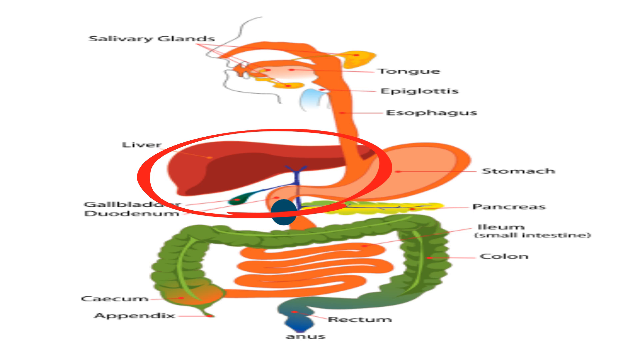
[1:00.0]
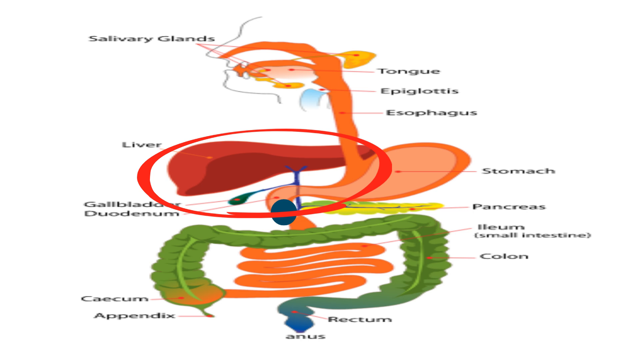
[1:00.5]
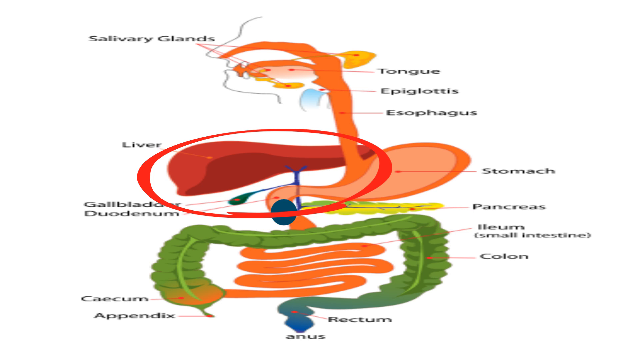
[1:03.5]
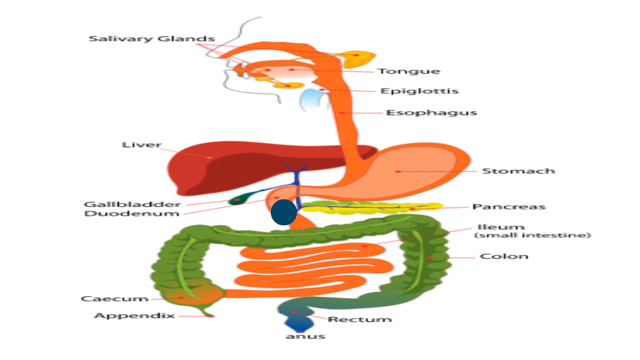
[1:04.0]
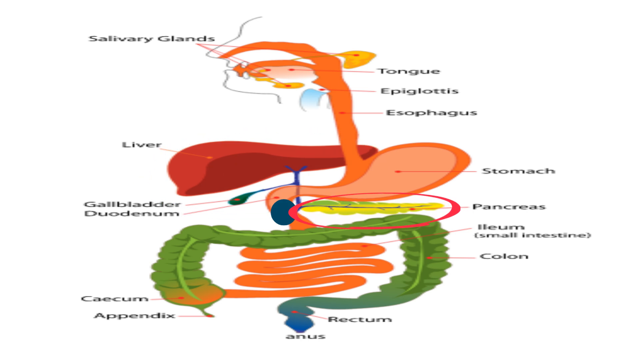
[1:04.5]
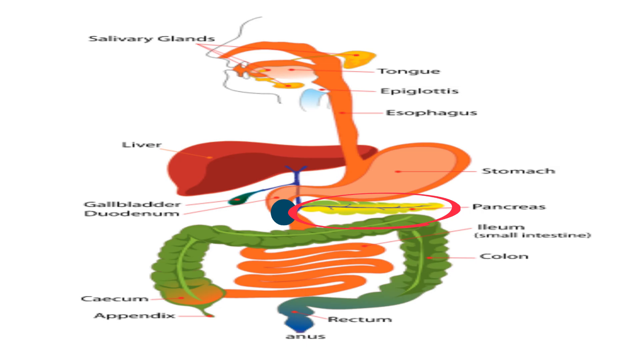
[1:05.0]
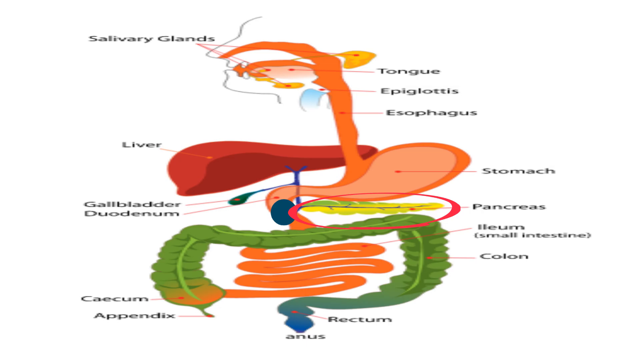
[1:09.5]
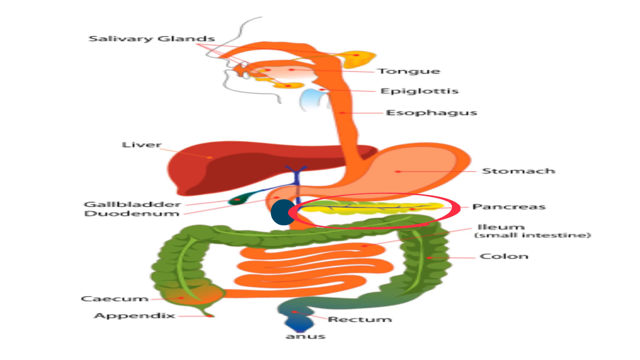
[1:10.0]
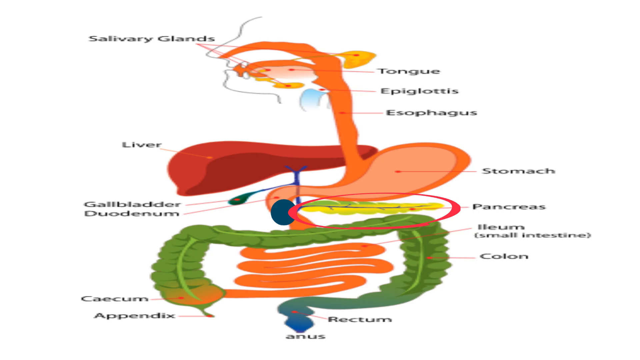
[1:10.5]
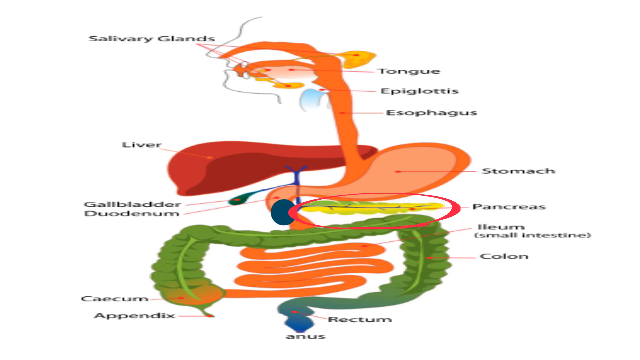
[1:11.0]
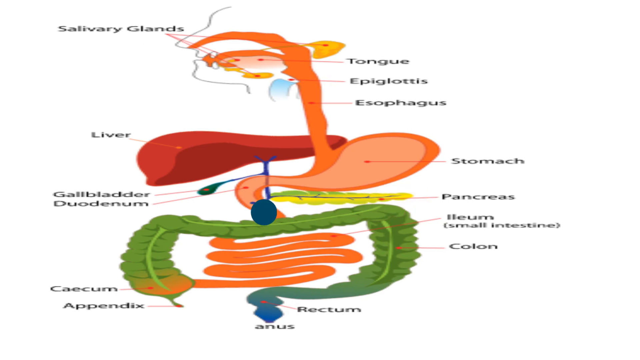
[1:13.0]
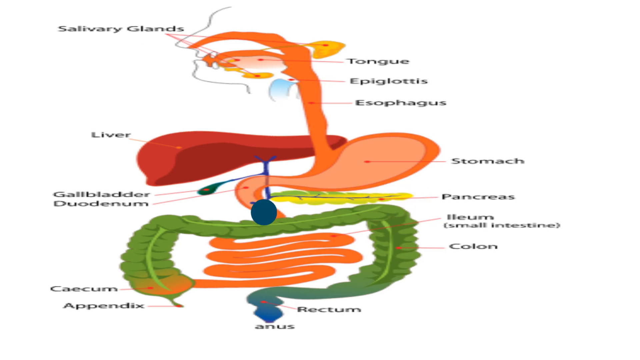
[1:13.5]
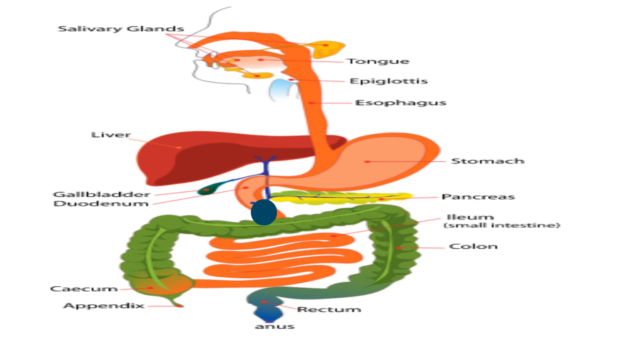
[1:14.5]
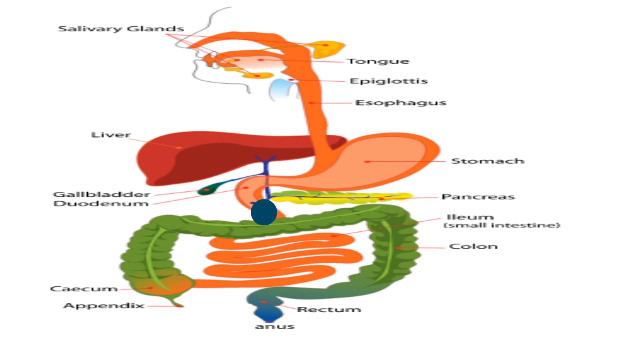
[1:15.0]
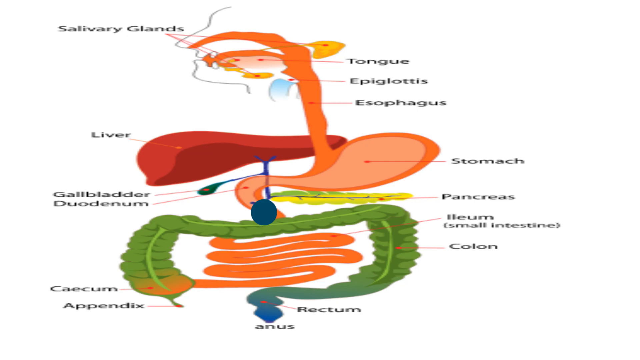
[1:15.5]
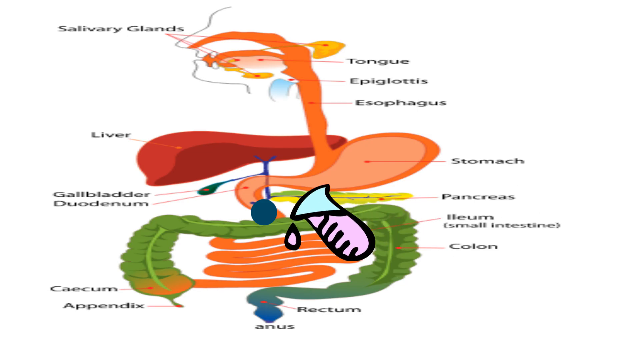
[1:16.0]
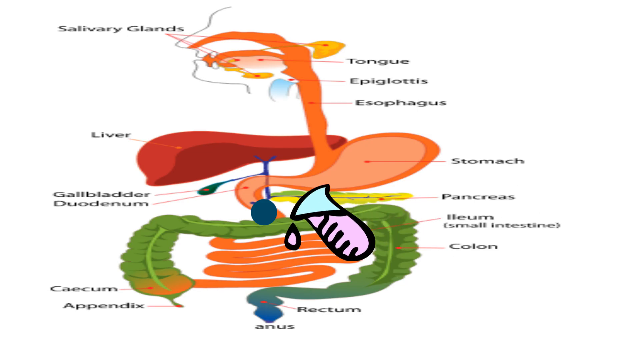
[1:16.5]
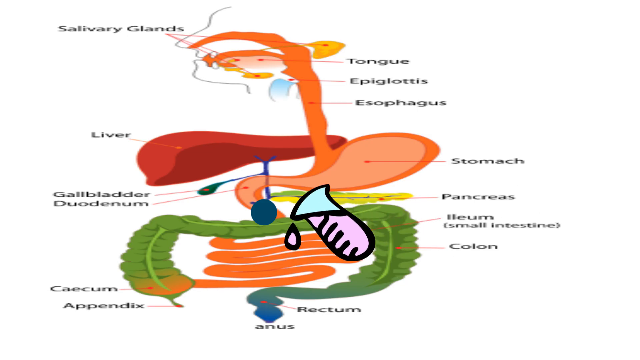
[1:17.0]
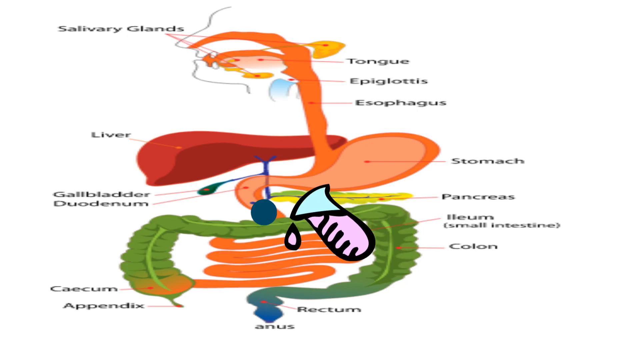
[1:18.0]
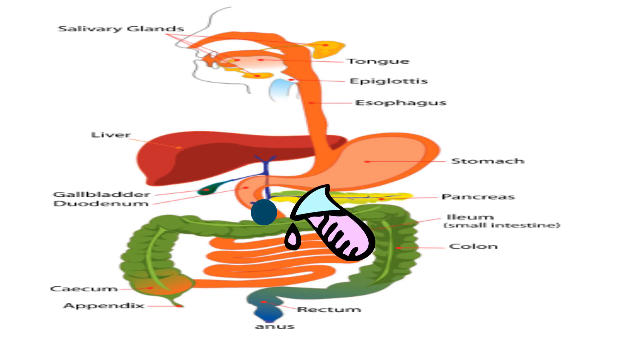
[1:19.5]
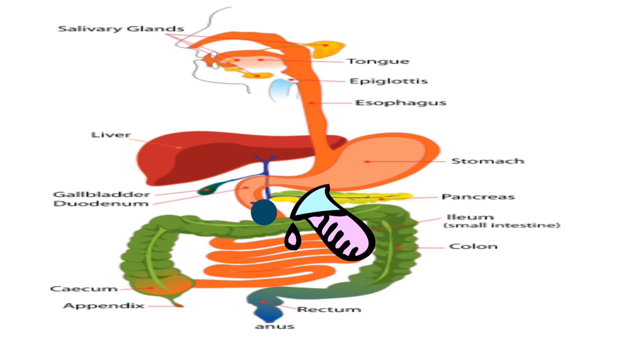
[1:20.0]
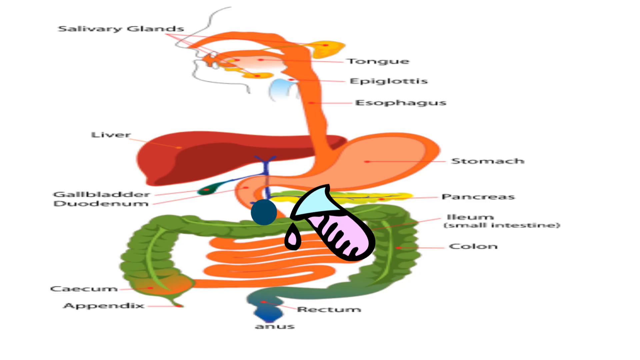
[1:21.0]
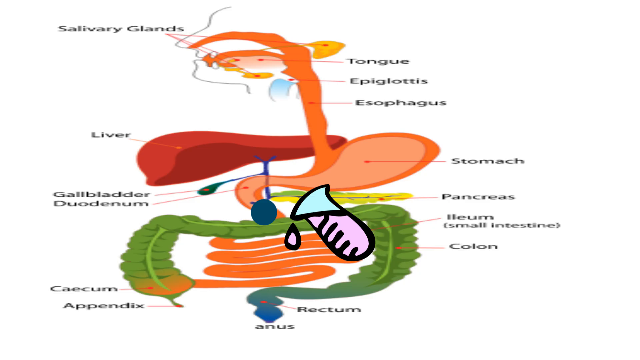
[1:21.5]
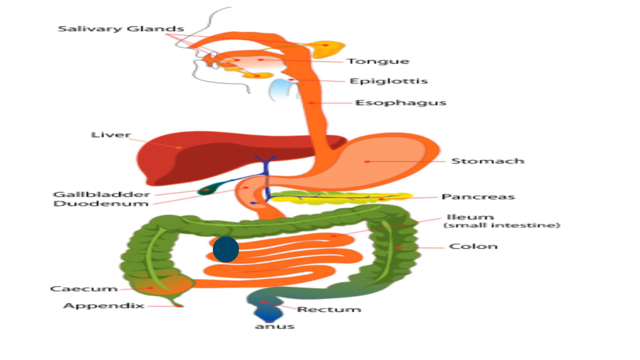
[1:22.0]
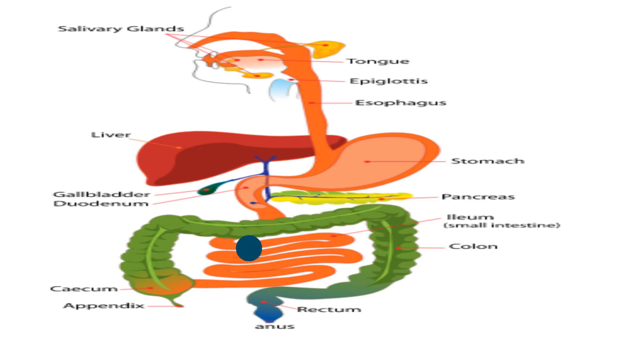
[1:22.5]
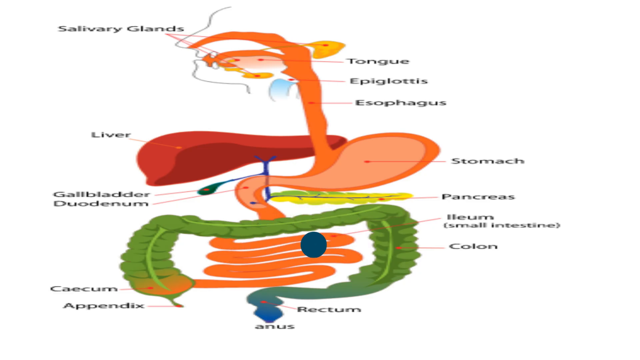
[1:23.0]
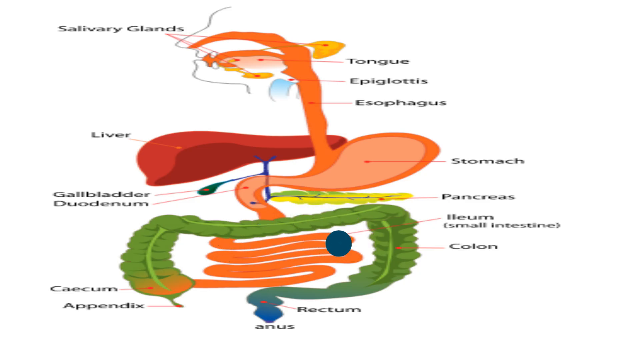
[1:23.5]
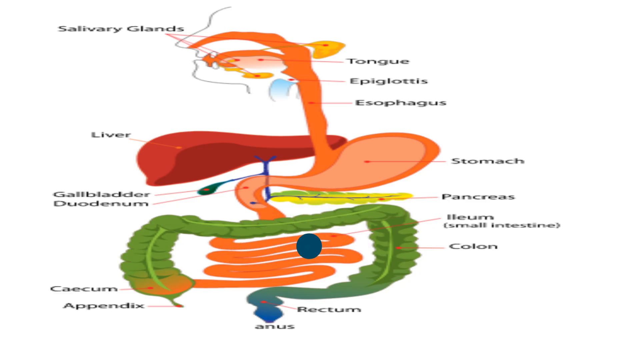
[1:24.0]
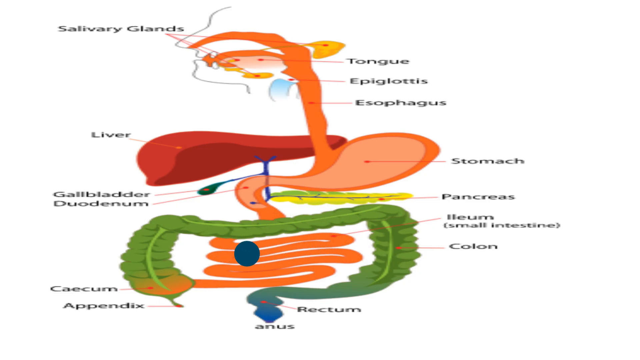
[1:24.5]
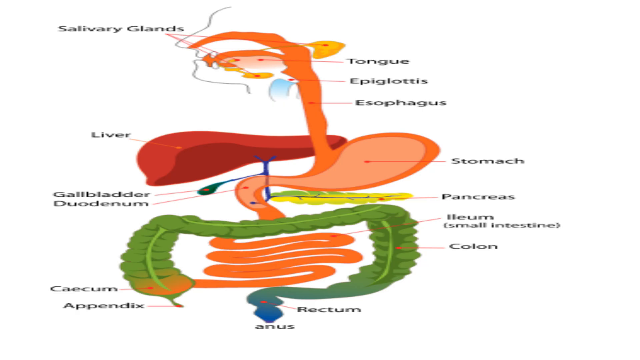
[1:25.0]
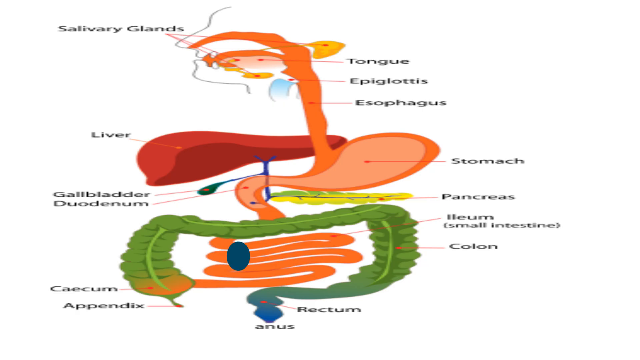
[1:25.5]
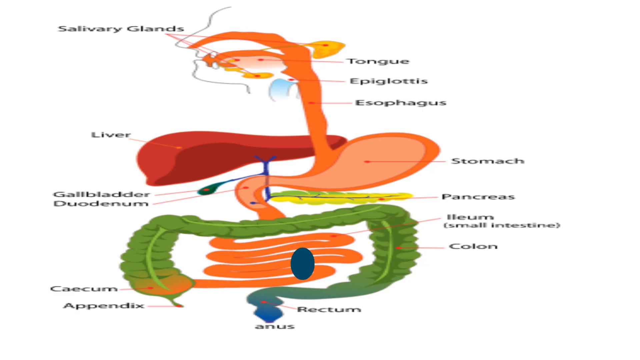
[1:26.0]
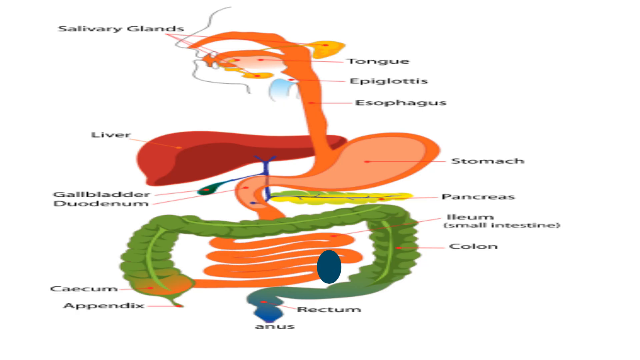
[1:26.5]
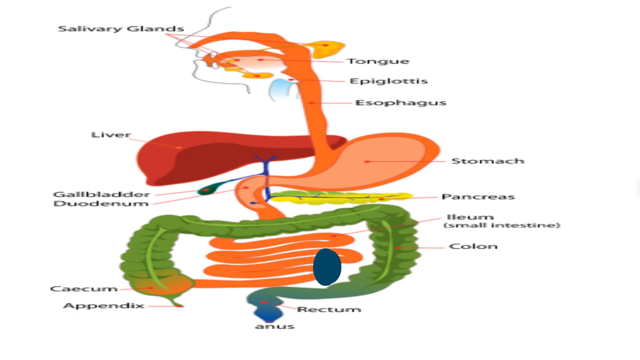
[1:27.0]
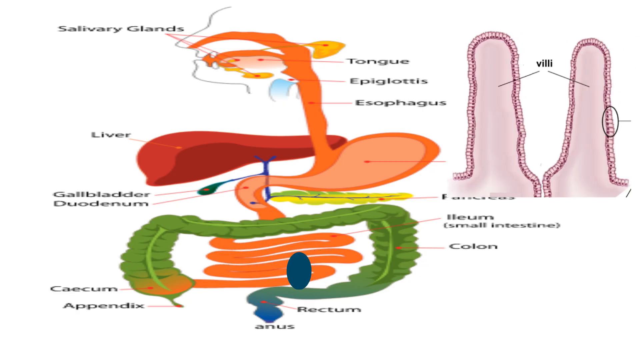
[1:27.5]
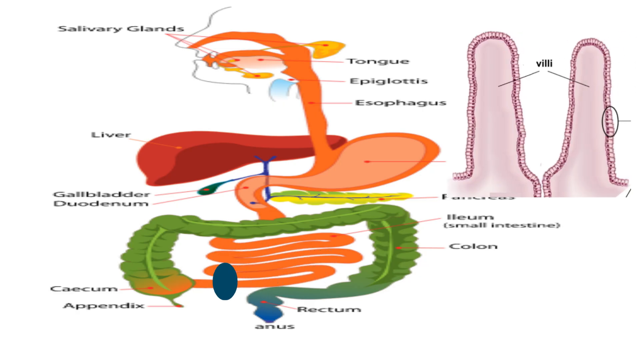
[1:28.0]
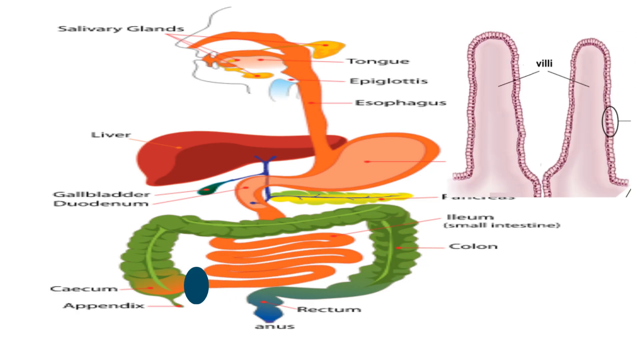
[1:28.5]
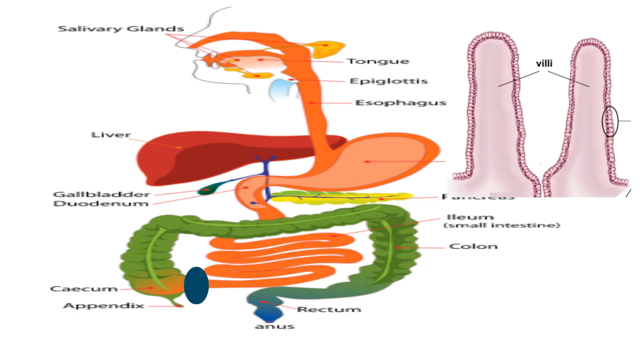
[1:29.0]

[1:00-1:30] An image of a digestive system has the names of its components on the left and right sides of the image, written in black on a white background and connected to the components by rather thin red arrows. A red circle appears around the liver, disappears, and then reappears in another area of the drawing, highlighting the pancreas. Next, an illustration of what seems to be a little hole with purple liquid inside appears, moving from the right end of the frame to the center. In the last seconds, the blue circular cursor reappears and moves back and forth, from right to left and left to right, seemingly simulating the passage of food inside the intestine.